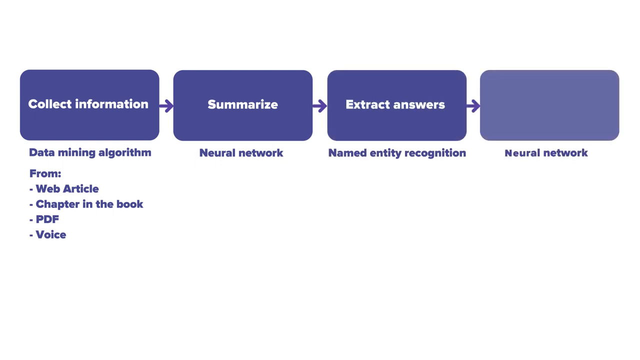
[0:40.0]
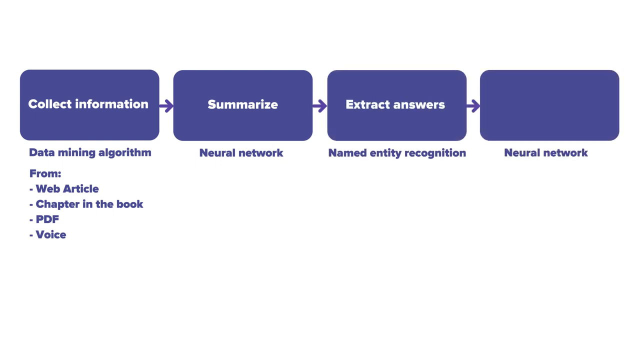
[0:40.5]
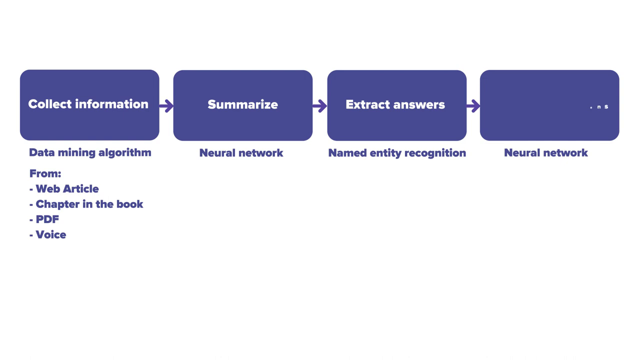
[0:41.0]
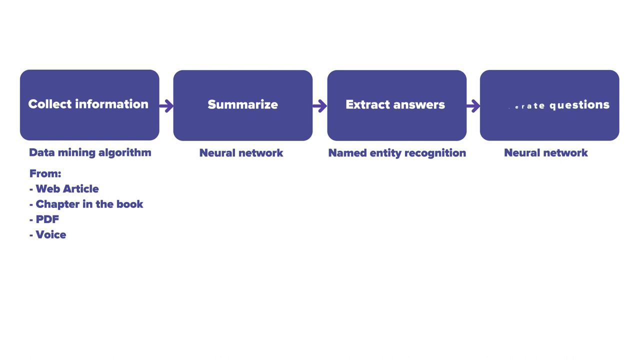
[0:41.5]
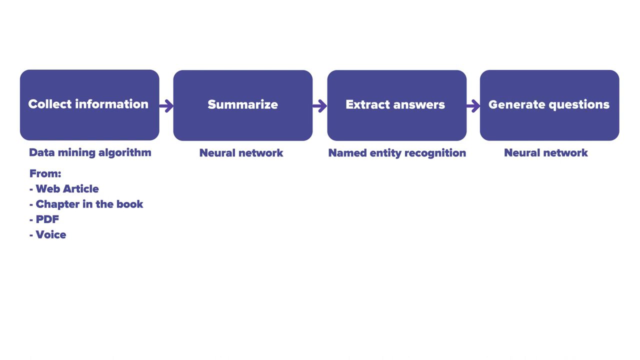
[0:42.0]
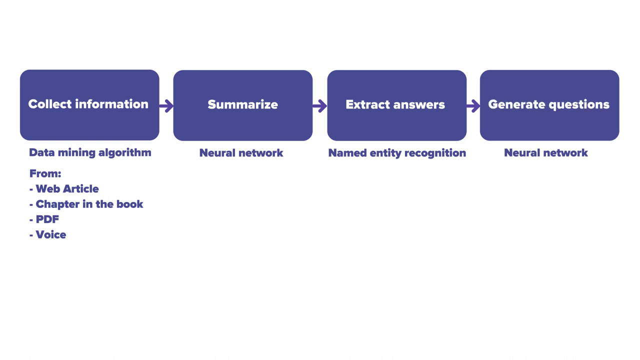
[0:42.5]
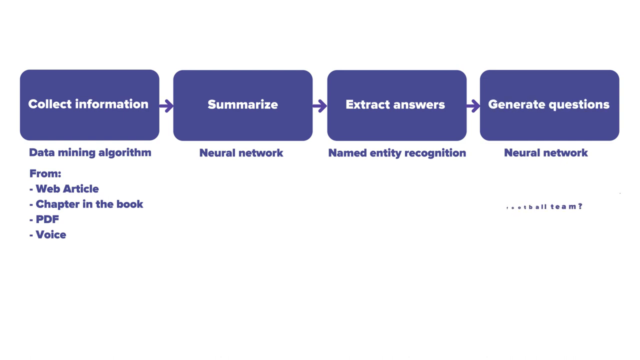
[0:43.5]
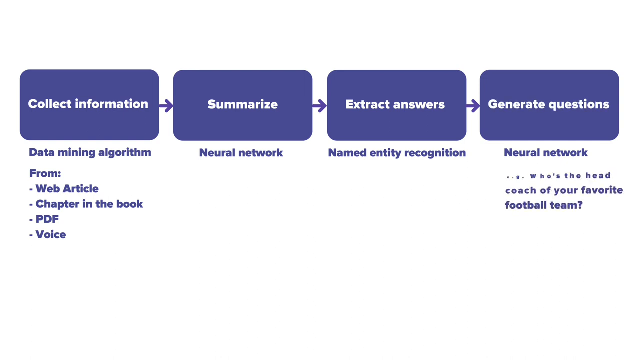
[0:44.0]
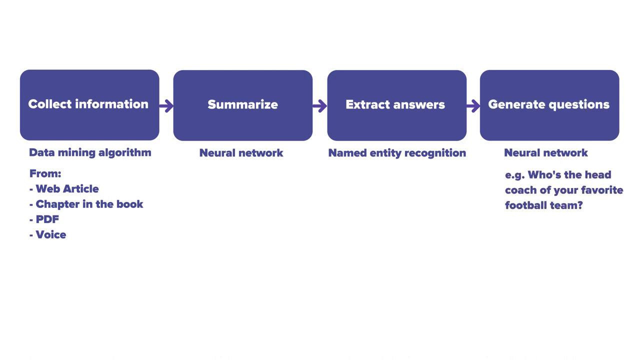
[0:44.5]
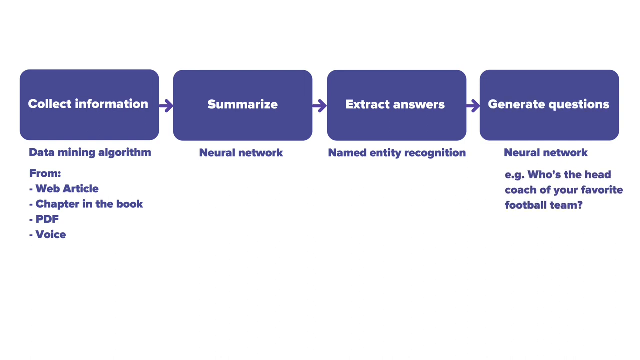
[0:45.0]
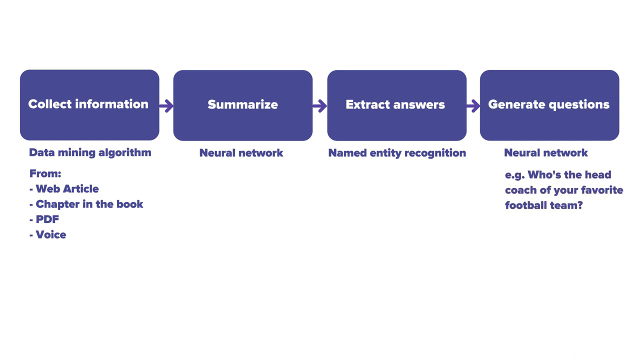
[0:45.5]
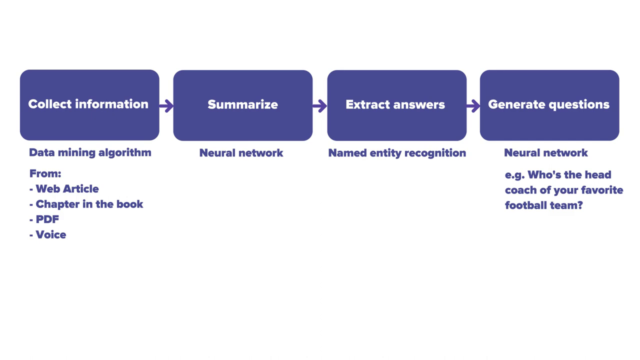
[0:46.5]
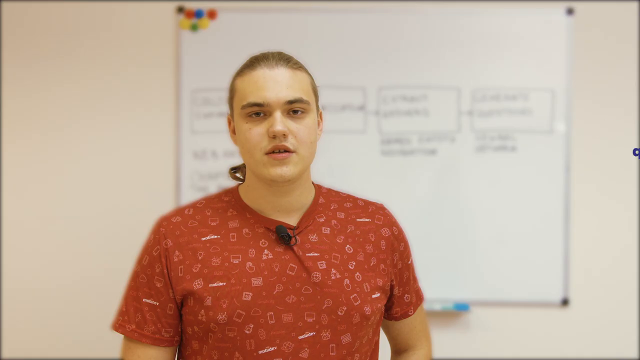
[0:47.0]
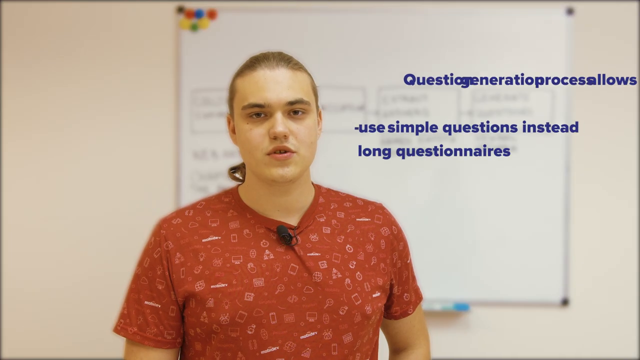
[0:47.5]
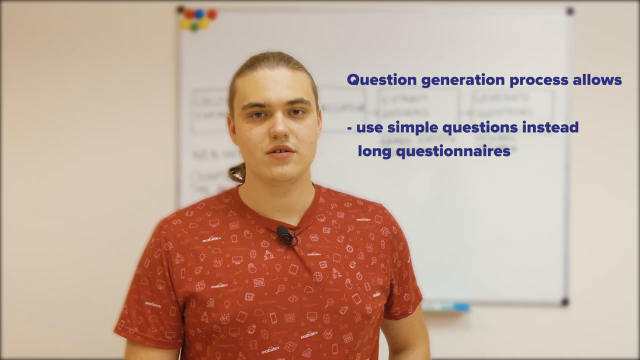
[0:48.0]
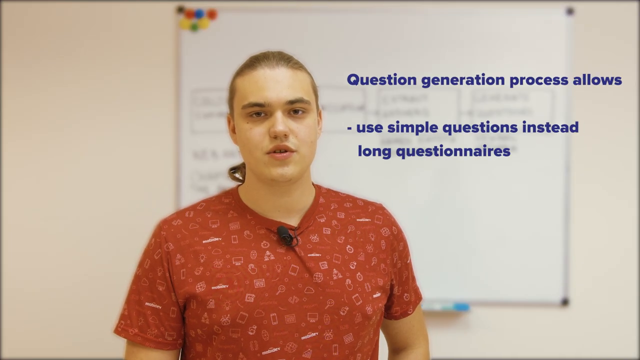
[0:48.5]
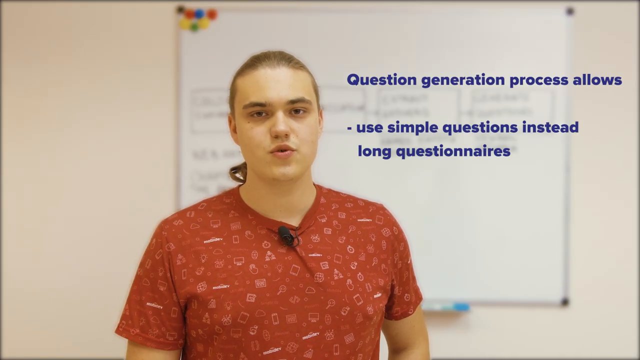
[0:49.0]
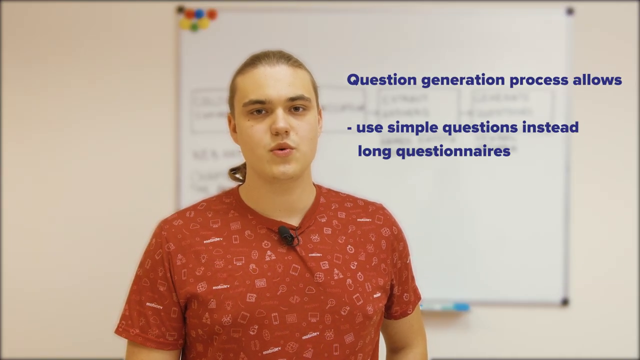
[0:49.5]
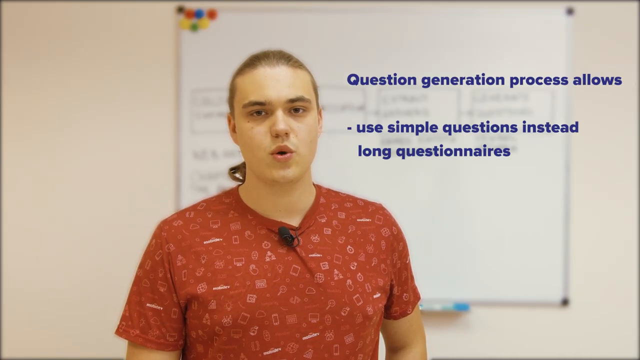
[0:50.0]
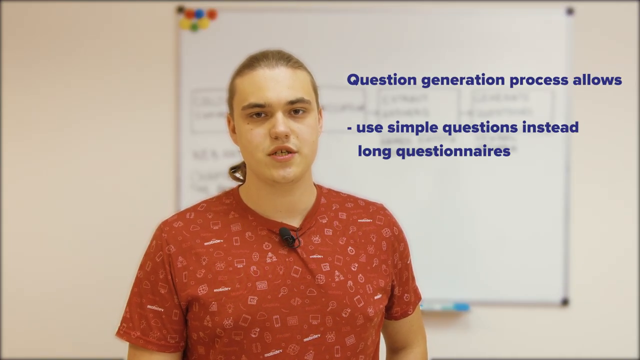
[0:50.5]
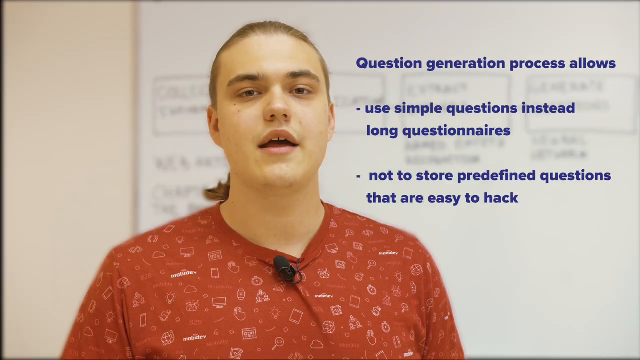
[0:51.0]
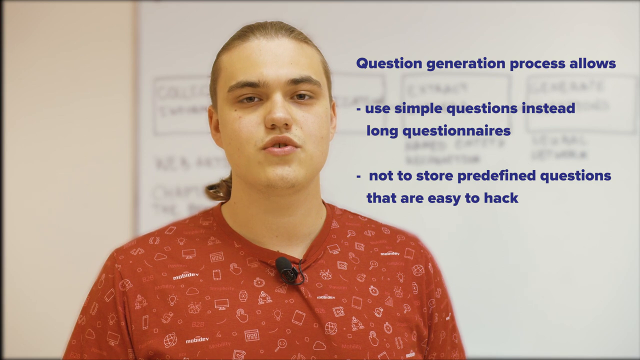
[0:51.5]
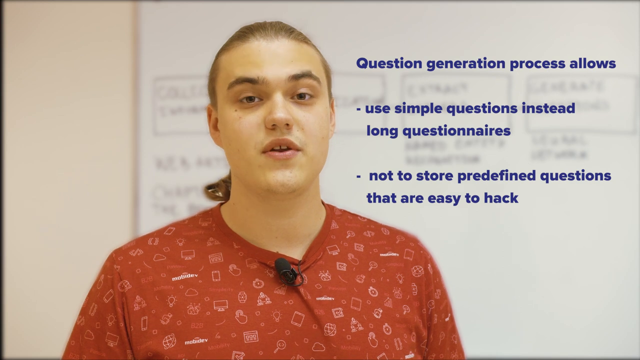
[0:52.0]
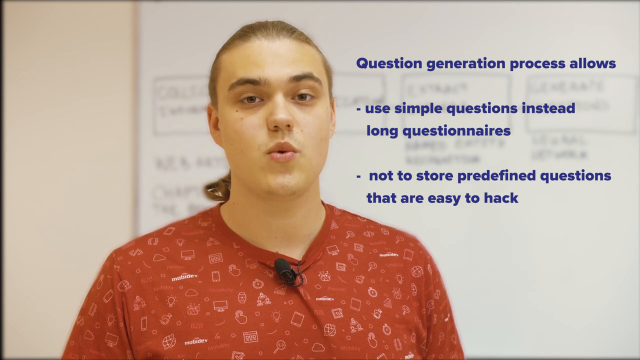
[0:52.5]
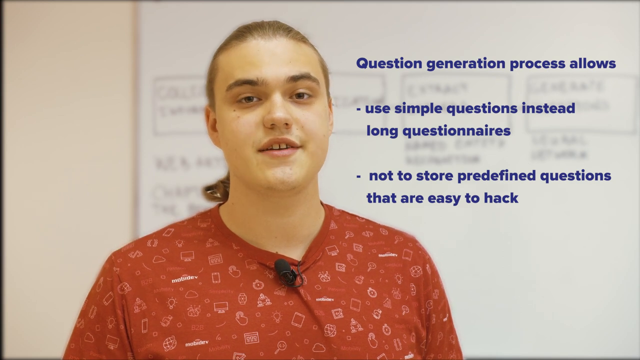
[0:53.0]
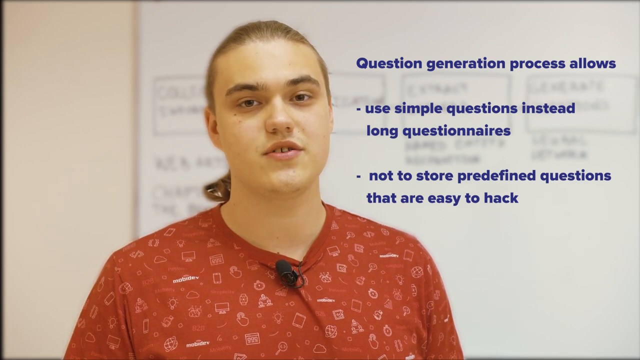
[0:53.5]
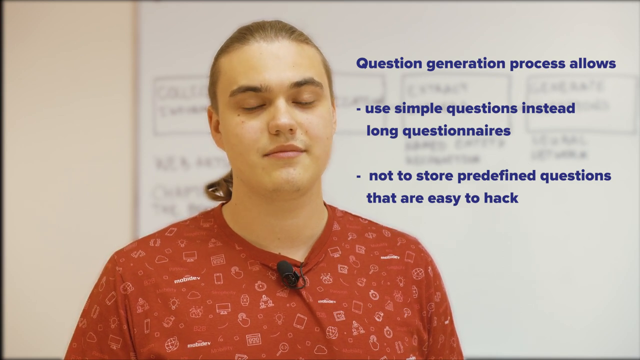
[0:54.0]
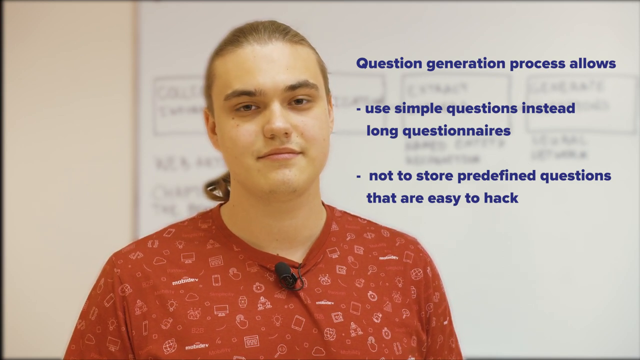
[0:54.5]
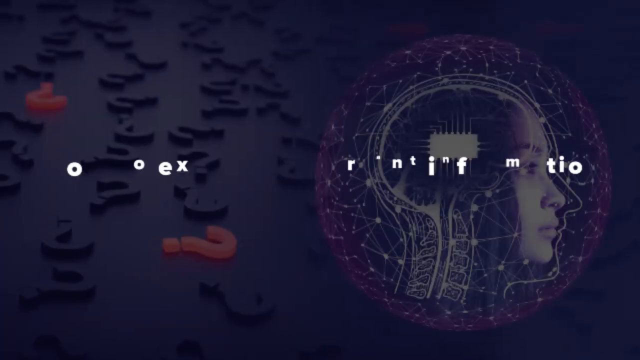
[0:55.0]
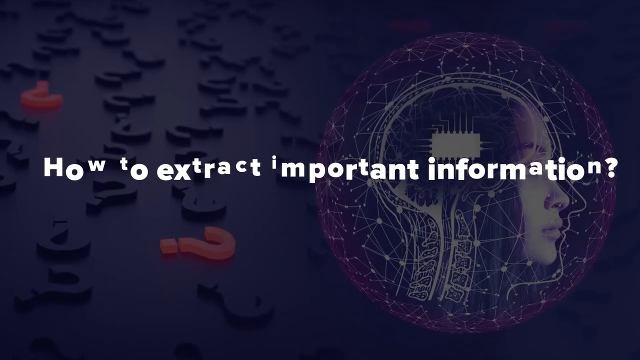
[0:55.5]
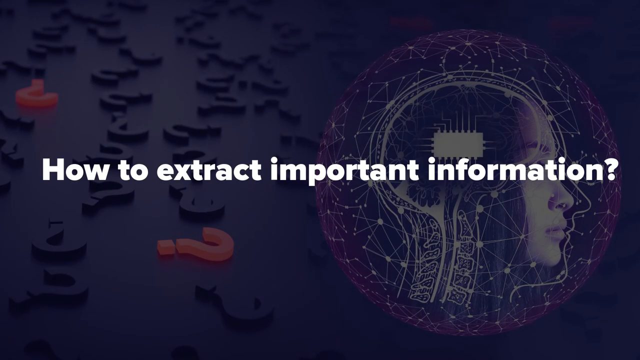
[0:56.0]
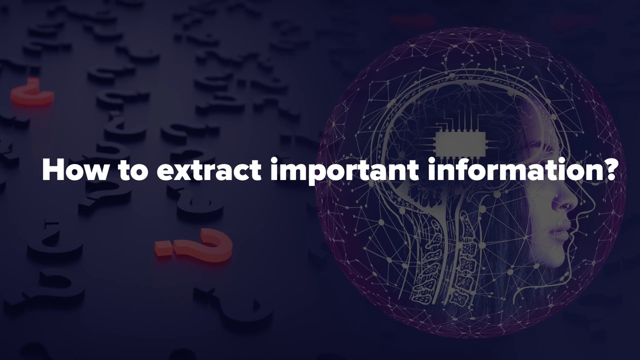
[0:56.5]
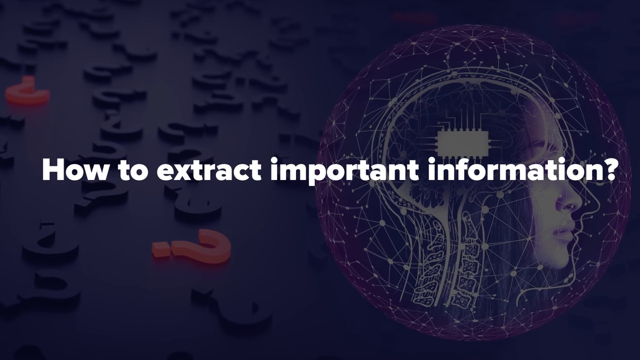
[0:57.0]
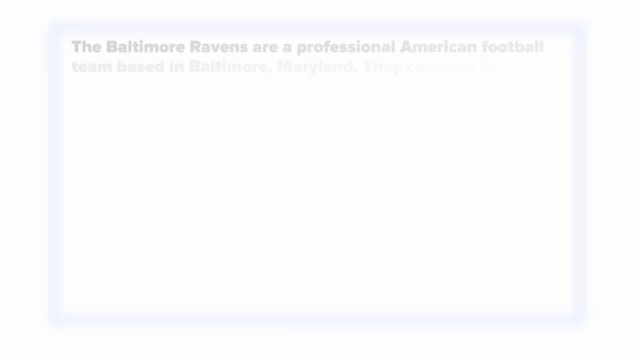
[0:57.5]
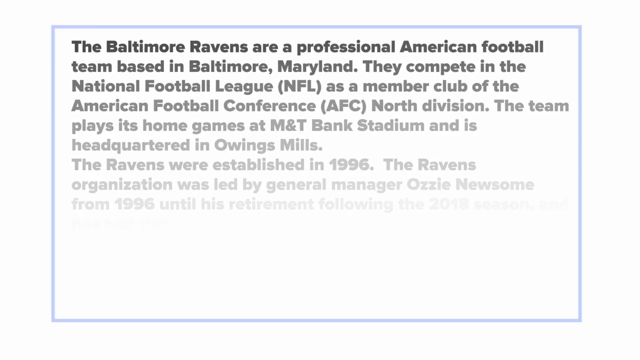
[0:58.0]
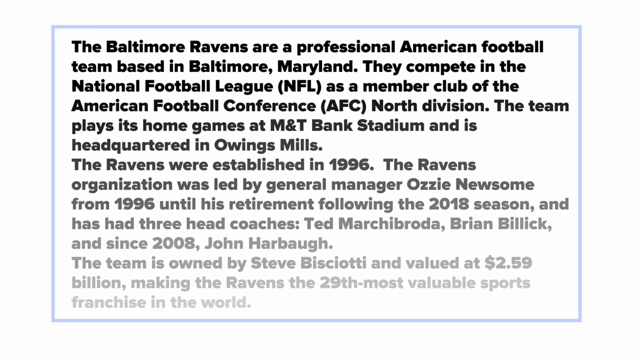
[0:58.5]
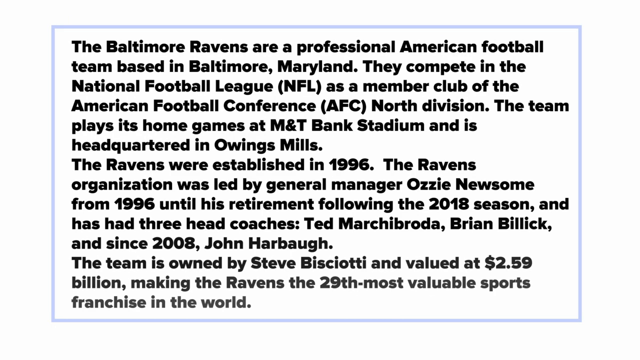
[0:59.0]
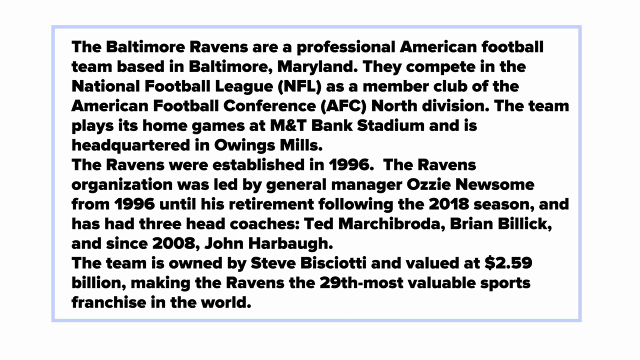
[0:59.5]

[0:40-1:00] A graph with parts labeled Collect Information, Summarize, Extract Answers and Neural Network shows the steps of generating questions for security authentication, from where the information is mined to how it is summarized and extracted. An example with a question is then presented. The video cuts to the engineer in a classroom setting with a whiteboard behind him. Blue text appears right next to him about how question generation allows simple questions instead of long questionnaires, and how newly generated questions are not stored anywhere in a database and are not easy to hack.